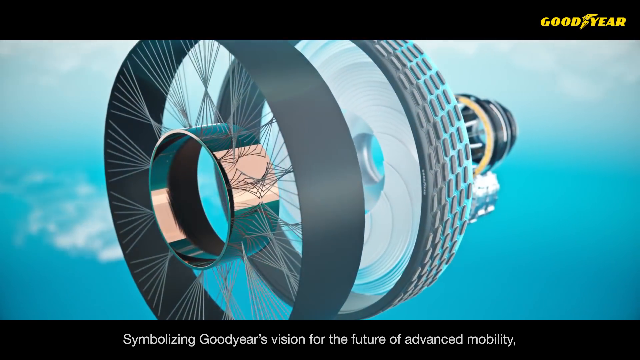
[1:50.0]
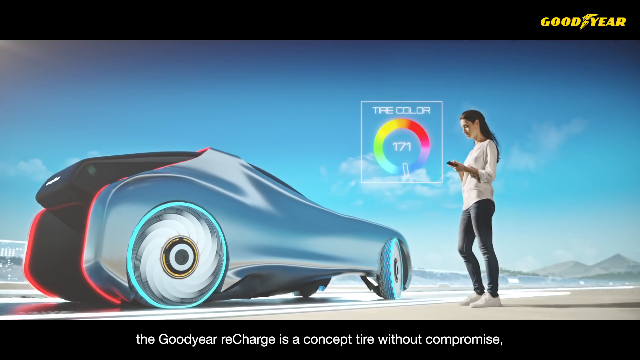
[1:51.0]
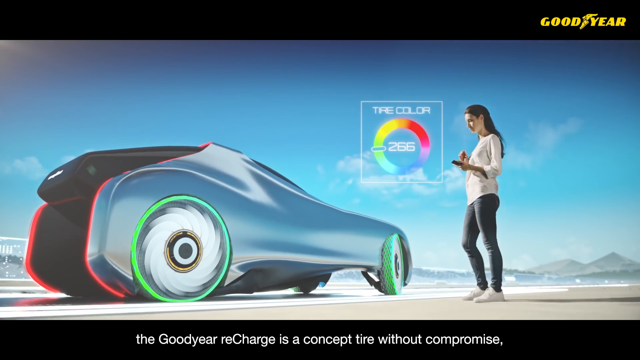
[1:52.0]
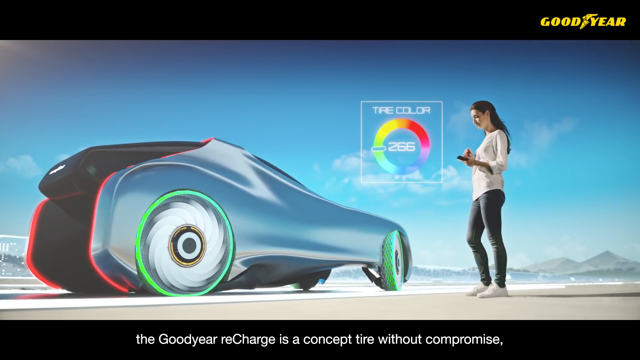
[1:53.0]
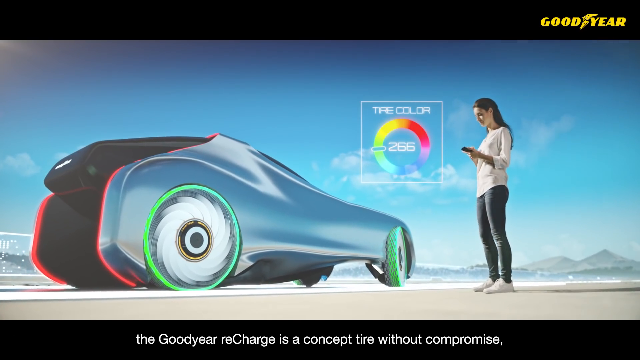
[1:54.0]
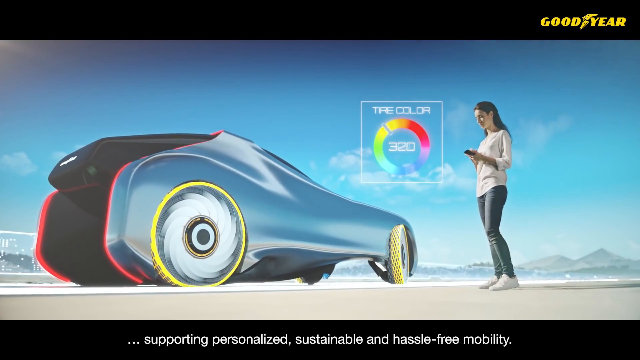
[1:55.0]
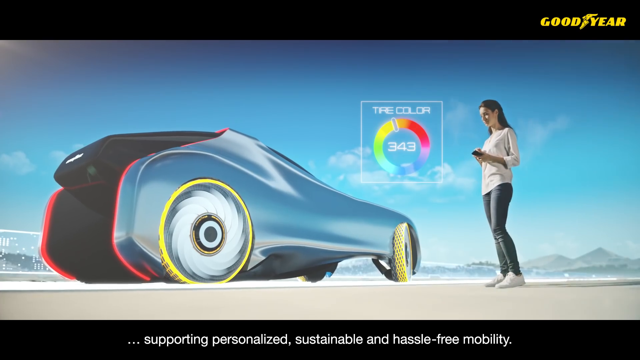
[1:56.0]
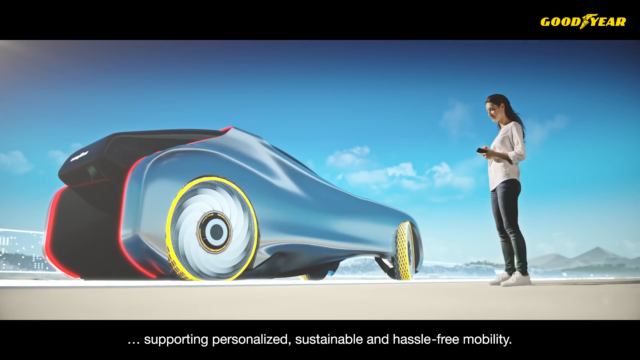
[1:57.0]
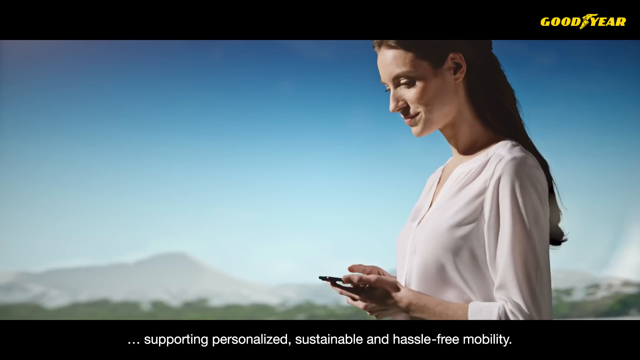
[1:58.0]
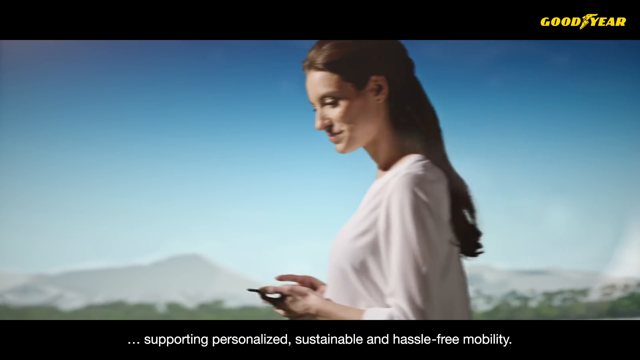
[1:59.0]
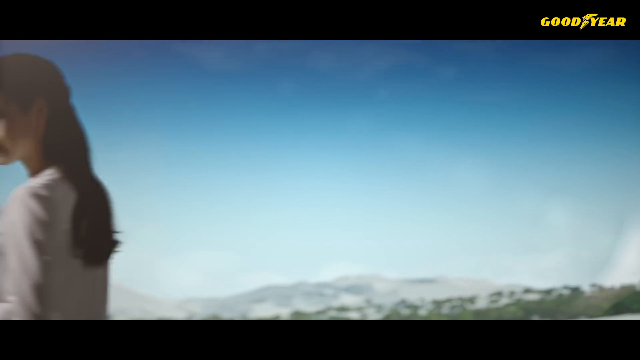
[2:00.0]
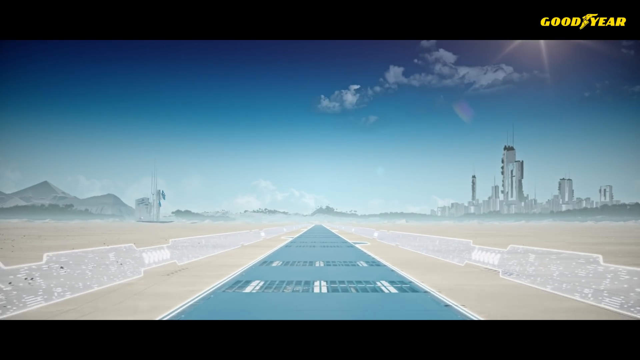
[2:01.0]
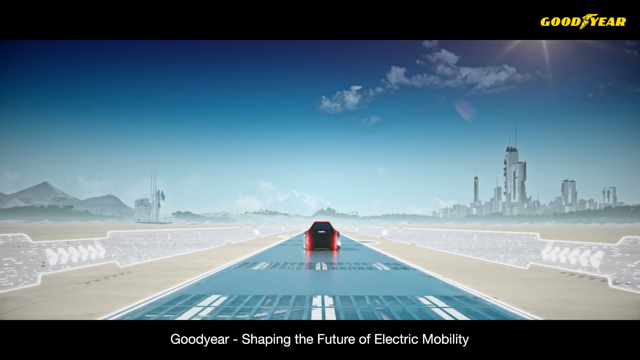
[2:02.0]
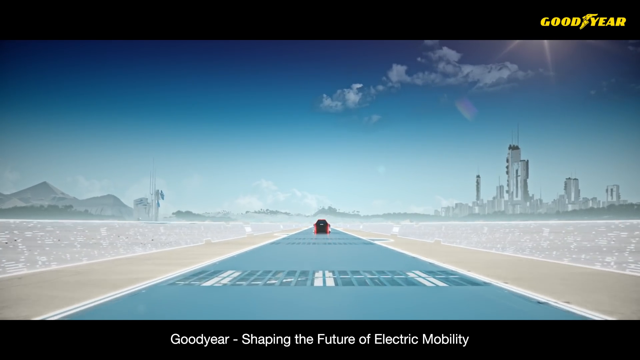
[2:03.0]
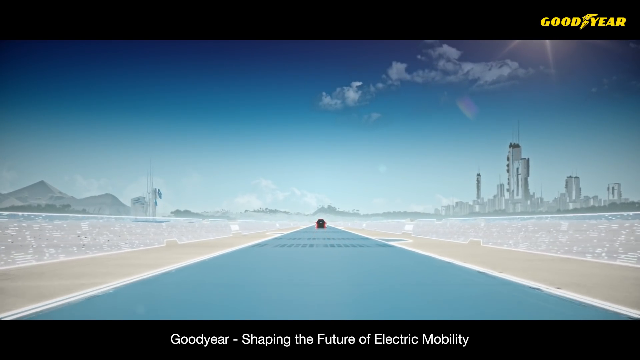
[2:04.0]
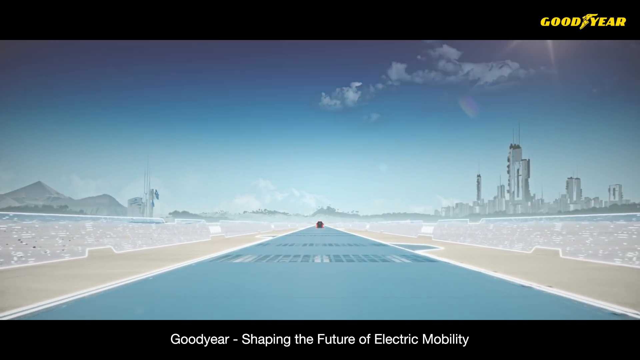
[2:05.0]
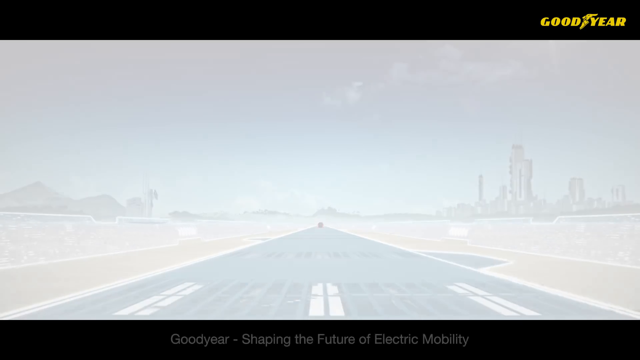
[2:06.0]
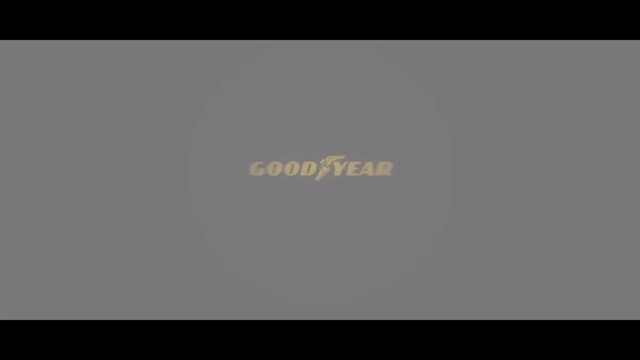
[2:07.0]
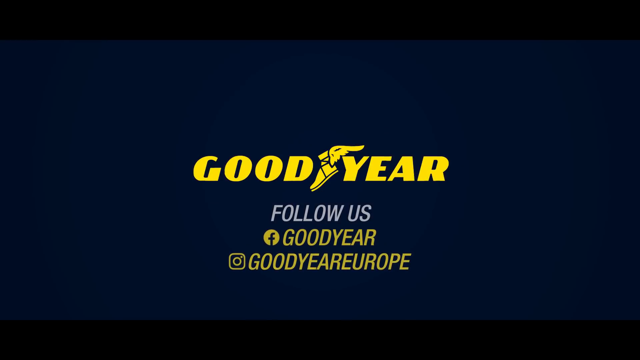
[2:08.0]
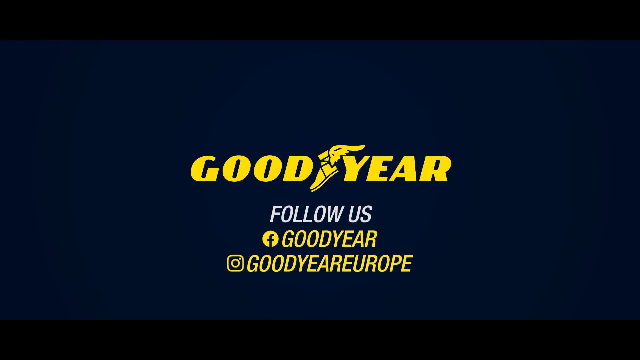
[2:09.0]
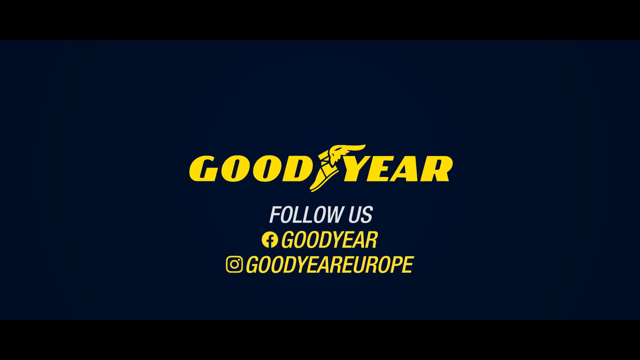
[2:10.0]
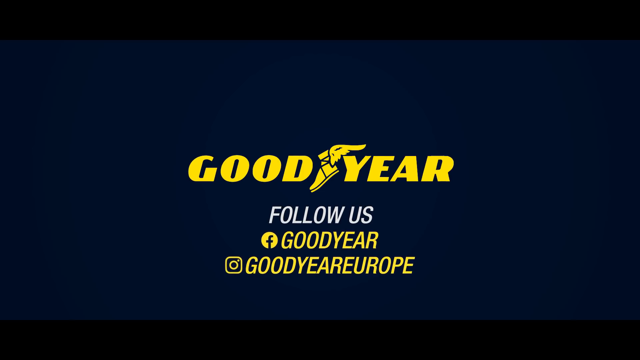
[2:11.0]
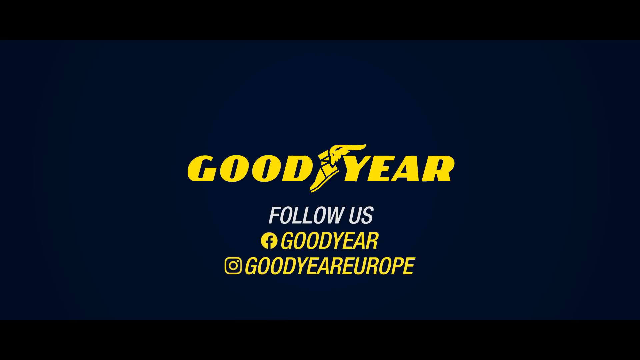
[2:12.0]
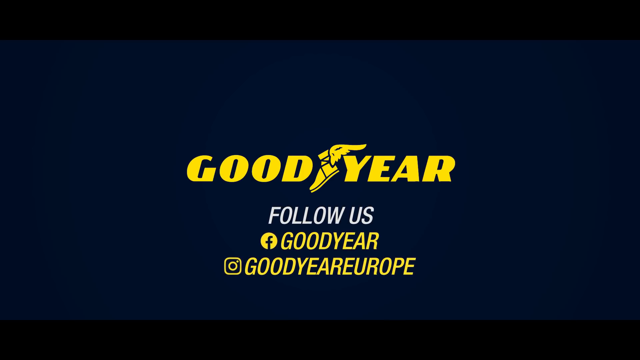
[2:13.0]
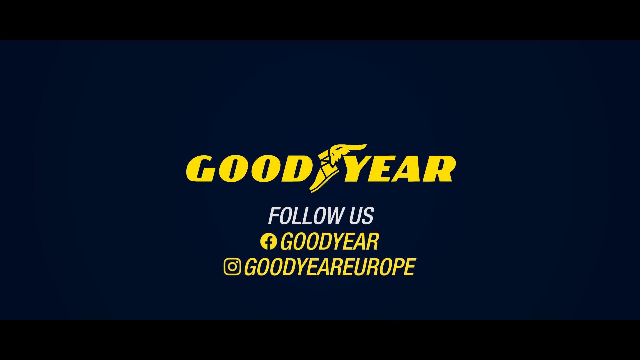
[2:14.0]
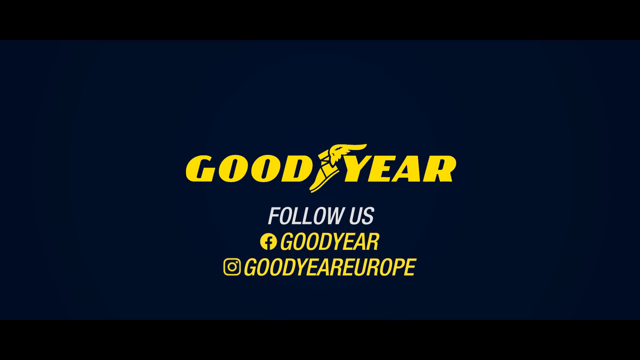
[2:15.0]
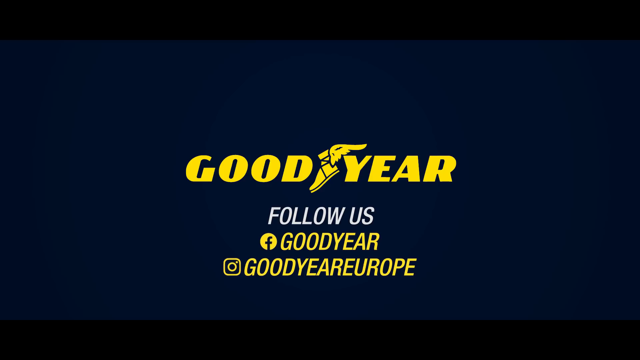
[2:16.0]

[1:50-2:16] Emma appears again, seemingly using an app on her phone to choose the color of the lights around the tires that will show while the car is driving. The car then drives off toward a city of sorts, still on the wide open road with no other vehicles, with buildings in the background. The imagery is not real photography but looks sketched out. The video ends with the Goodyear logo, followed by text reading "follow us Facebook Goodyear" and an Instagram handle "GOODYEAREUROPE". There is a small, unclear emblem in the middle of the logo, possibly a boot with an eagle's head between it.